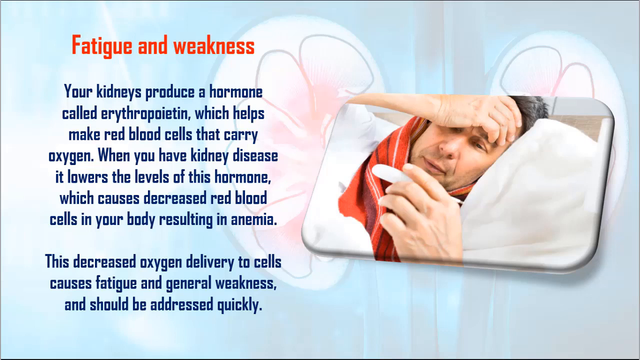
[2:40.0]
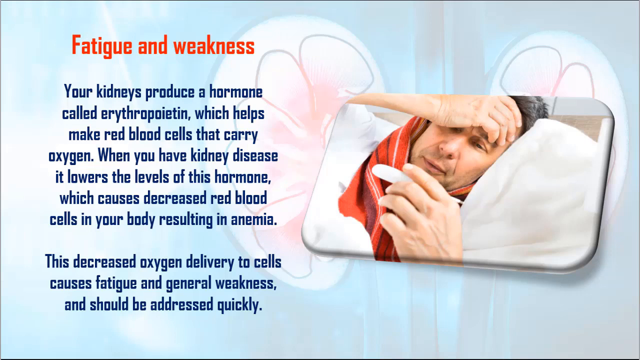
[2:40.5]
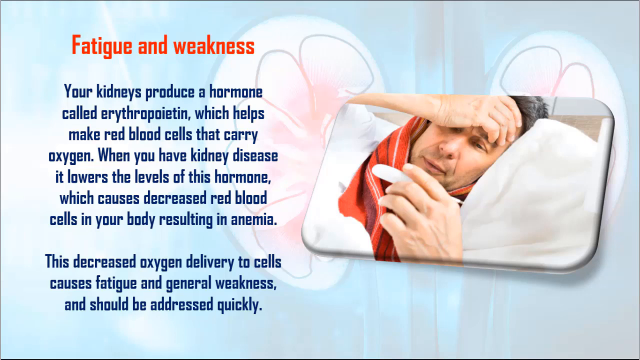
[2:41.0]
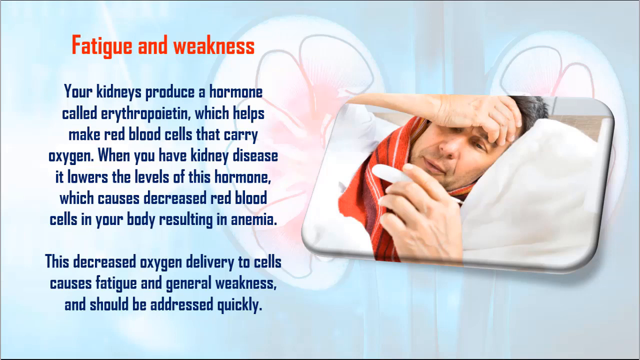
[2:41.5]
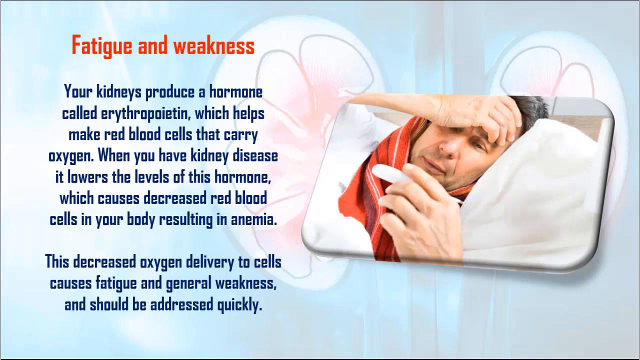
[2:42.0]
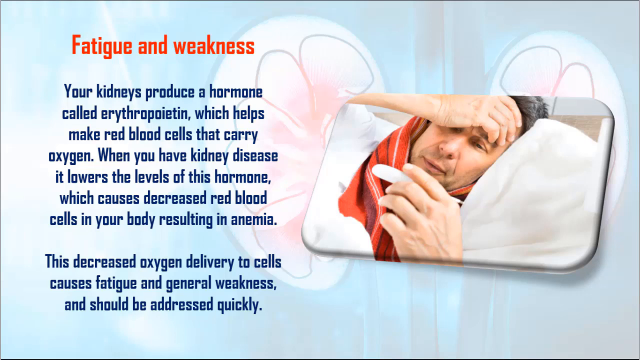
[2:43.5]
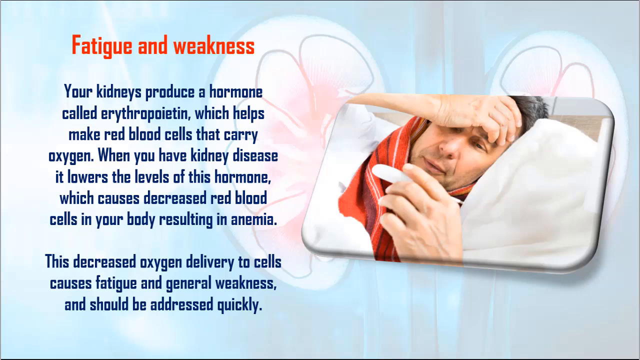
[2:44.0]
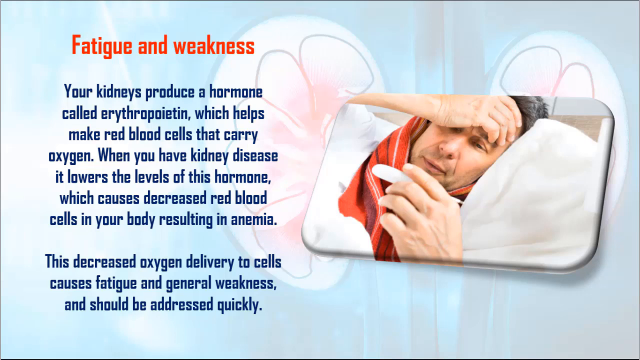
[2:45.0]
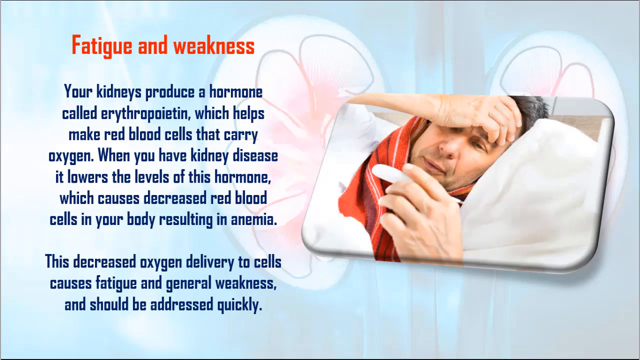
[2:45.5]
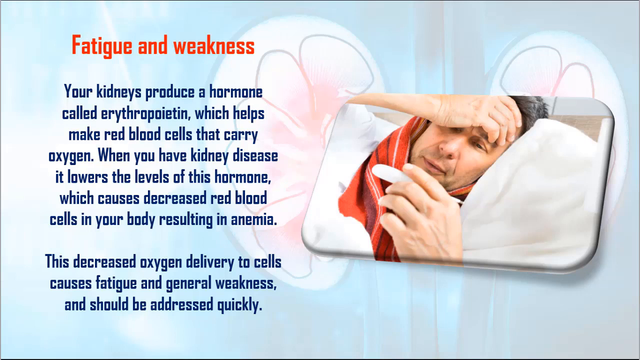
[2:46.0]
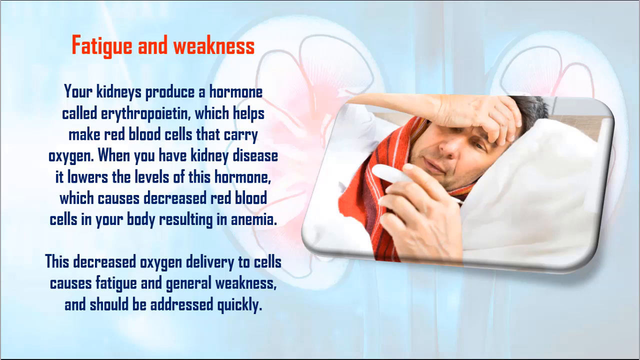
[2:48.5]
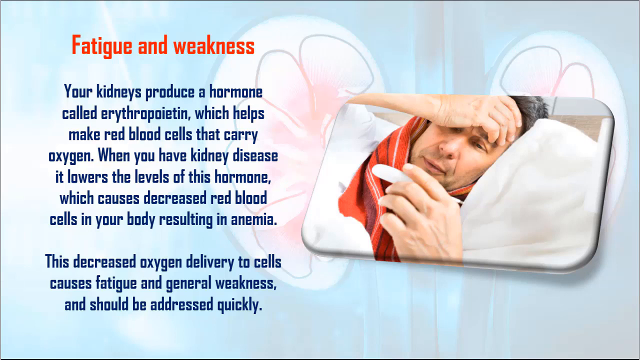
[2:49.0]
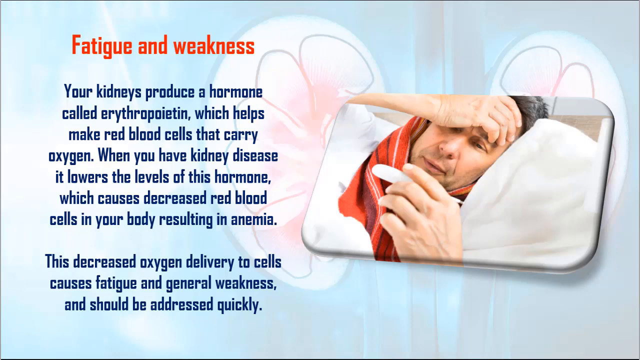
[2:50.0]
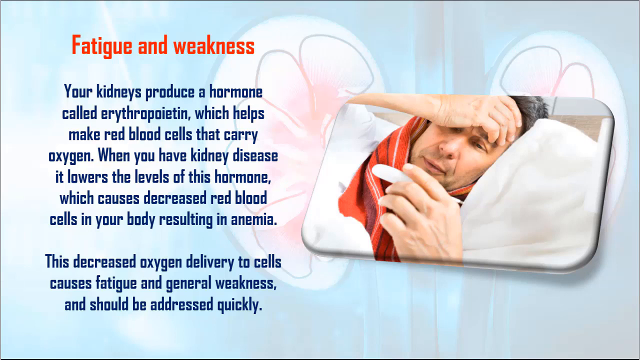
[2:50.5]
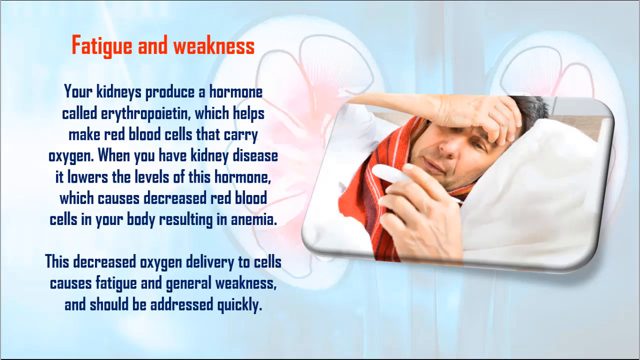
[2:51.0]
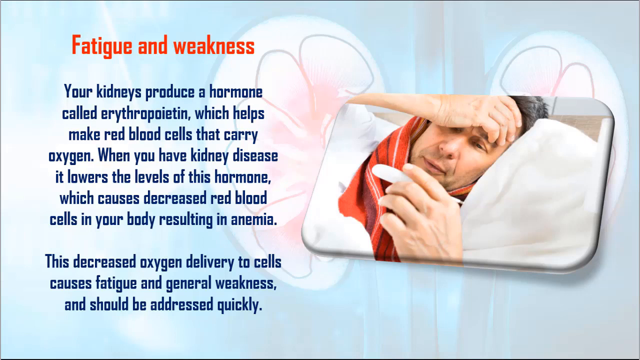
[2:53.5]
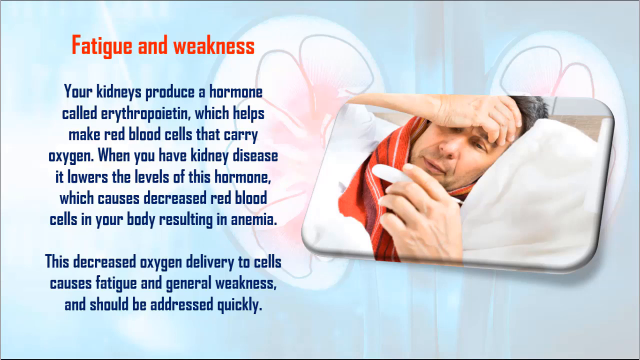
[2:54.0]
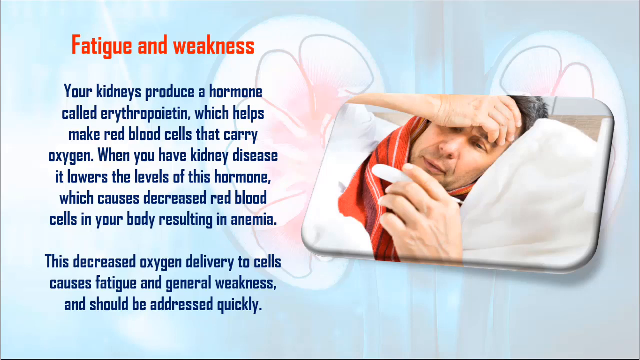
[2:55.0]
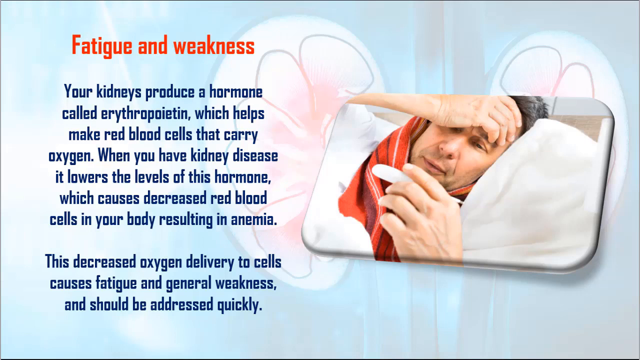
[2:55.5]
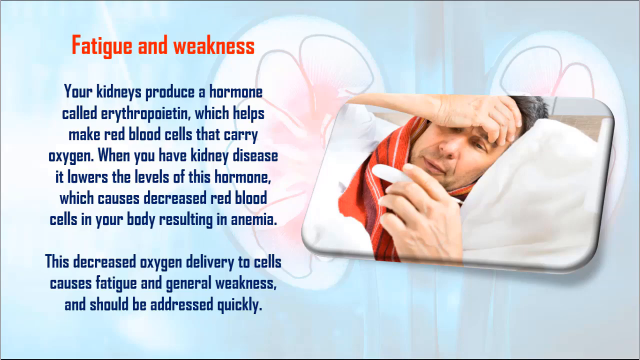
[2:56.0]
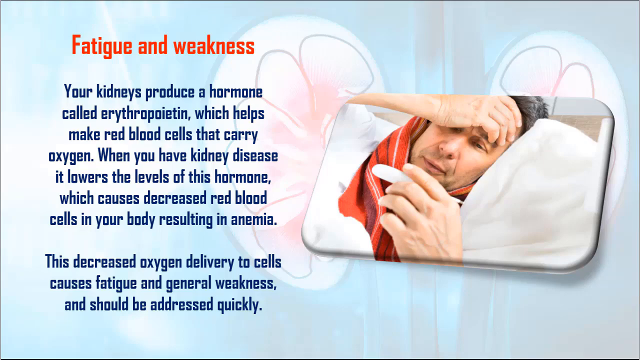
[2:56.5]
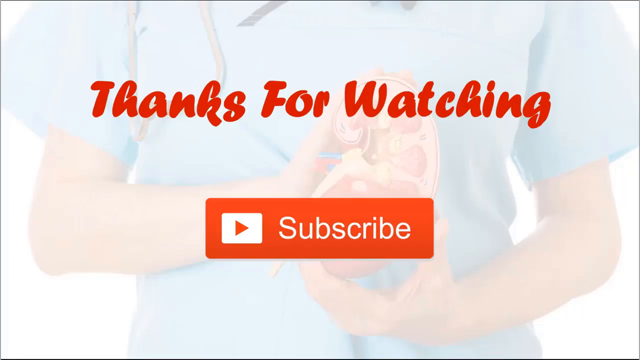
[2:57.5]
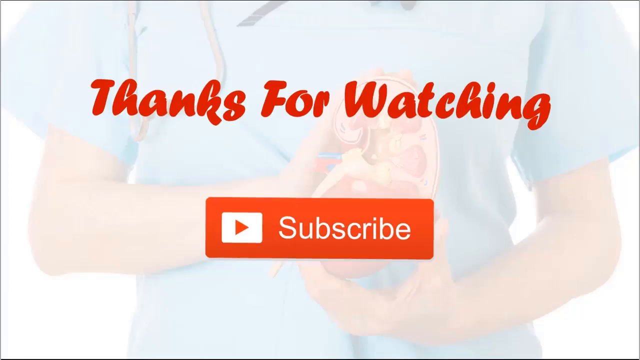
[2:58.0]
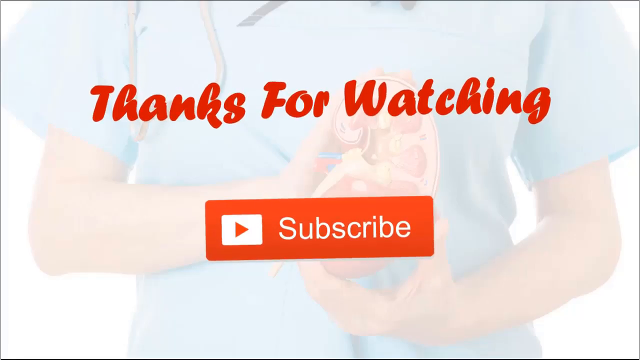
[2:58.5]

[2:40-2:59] The background is mostly blue with a little white. Two drawn kidneys are on the right side of the screen; they are mostly white, both with small oval-shaped objects inside and areas of pink in these ovals. Two blue tubes are side by side in the center of the kidneys, running vertically from the top of the screen to the bottom. On the right side of the screen is a picture of a man in bed, surrounded by a white pillow and white sheets. He has on a red towel with black and white stripes, tied around the back of his head and over his neck. In his left hand he holds a white thermometer, and with his right hand he holds his forehead. He has a very concerned look on his face as he looks at the thermometer. On the left side is text about fatigue and weakness with kidney damage, two paragraphs long. The image stays on screen for several seconds.